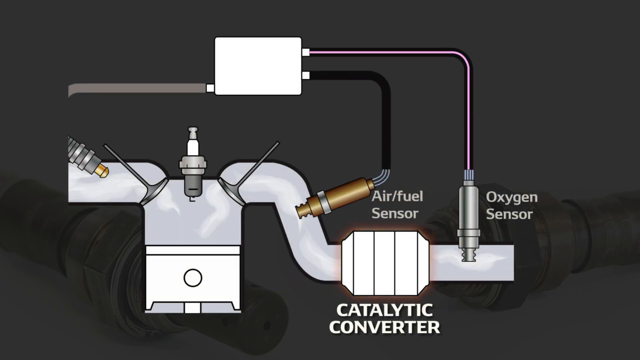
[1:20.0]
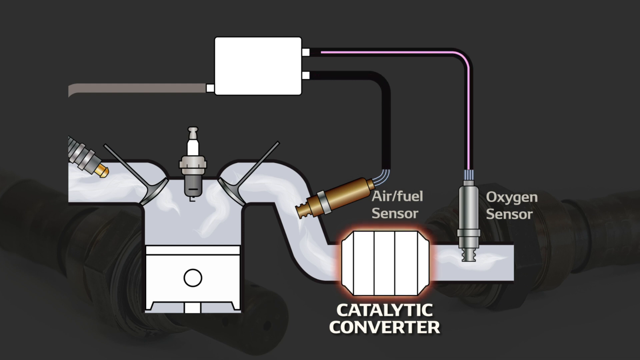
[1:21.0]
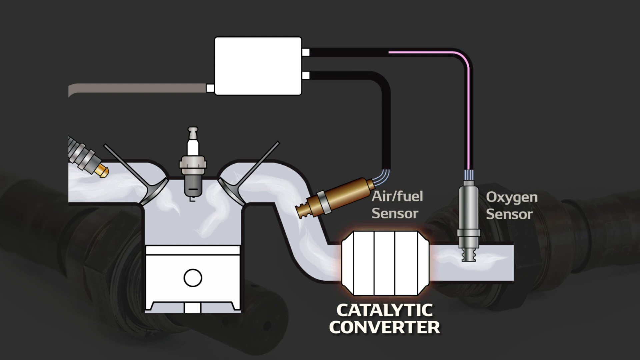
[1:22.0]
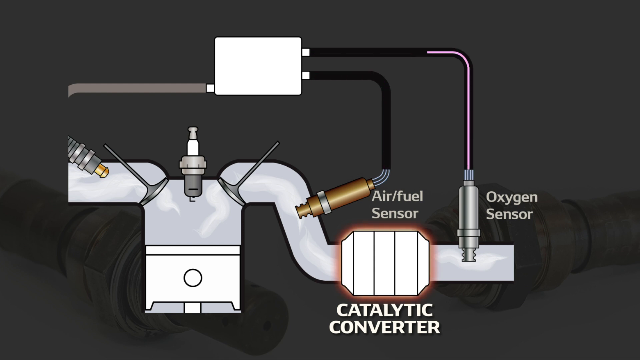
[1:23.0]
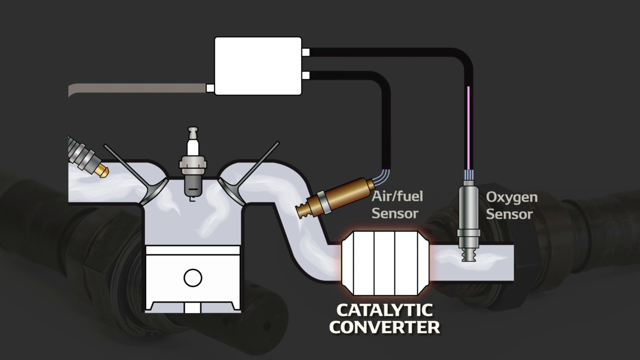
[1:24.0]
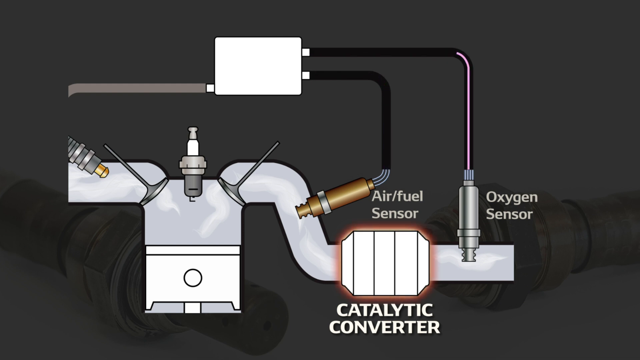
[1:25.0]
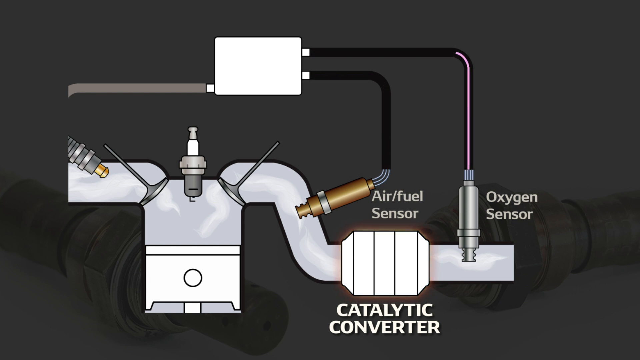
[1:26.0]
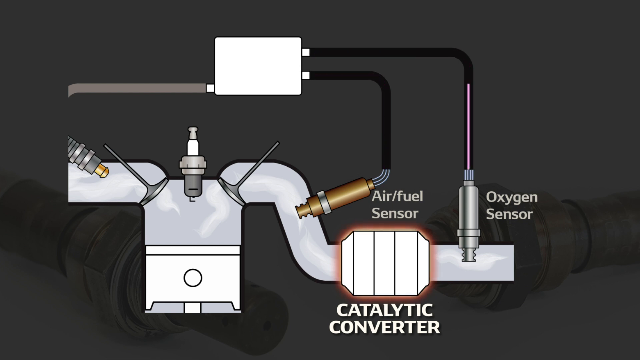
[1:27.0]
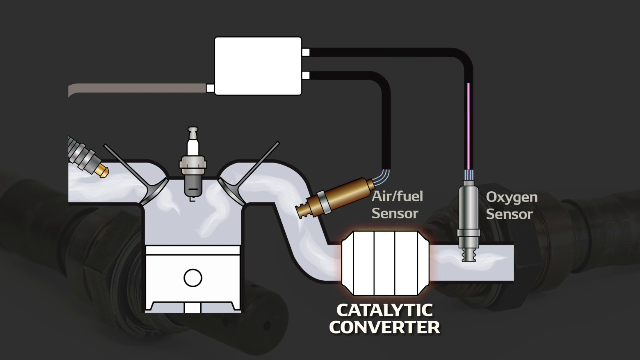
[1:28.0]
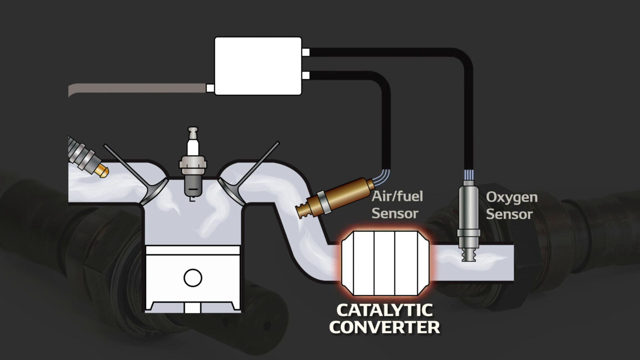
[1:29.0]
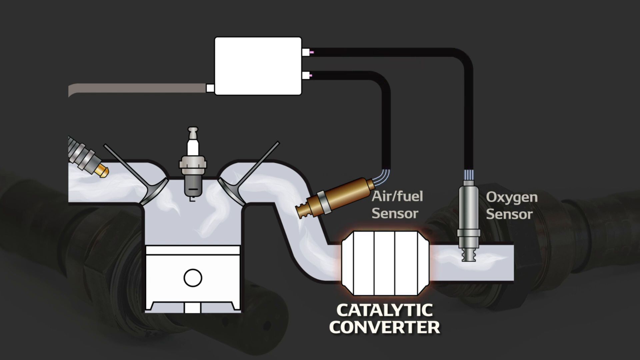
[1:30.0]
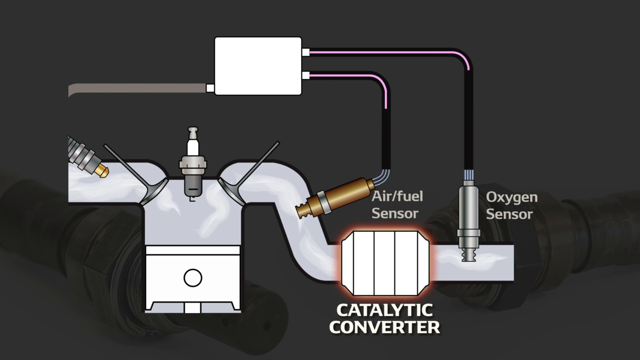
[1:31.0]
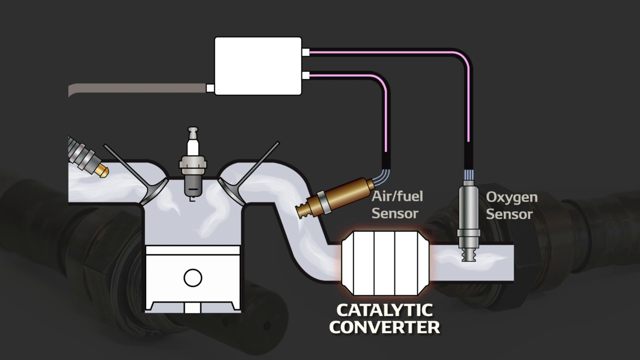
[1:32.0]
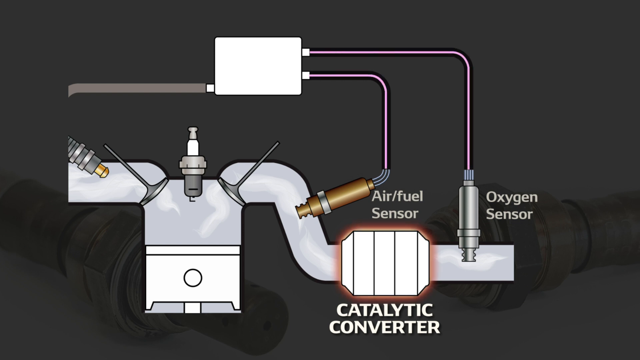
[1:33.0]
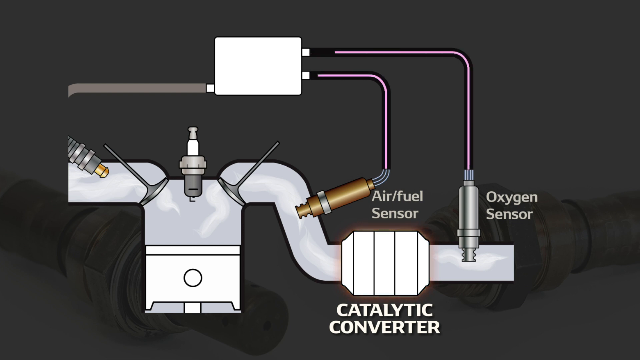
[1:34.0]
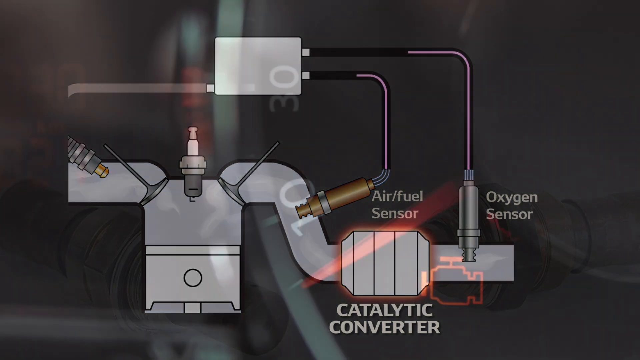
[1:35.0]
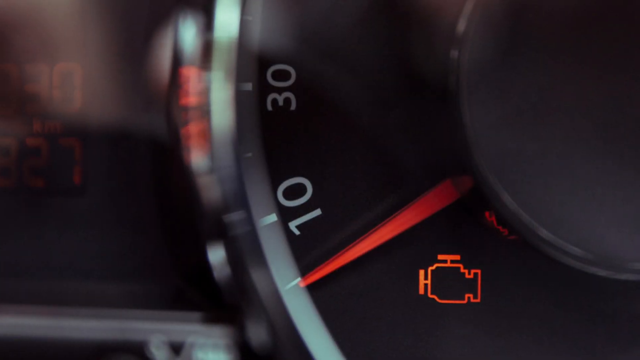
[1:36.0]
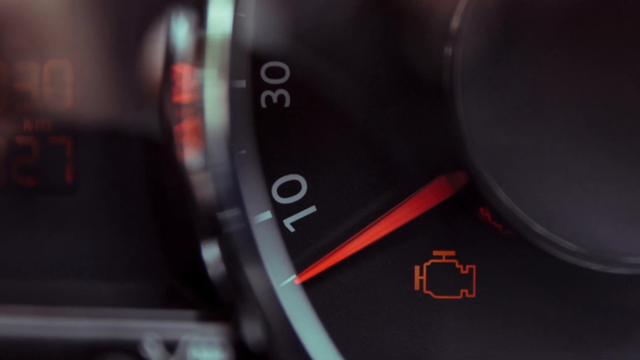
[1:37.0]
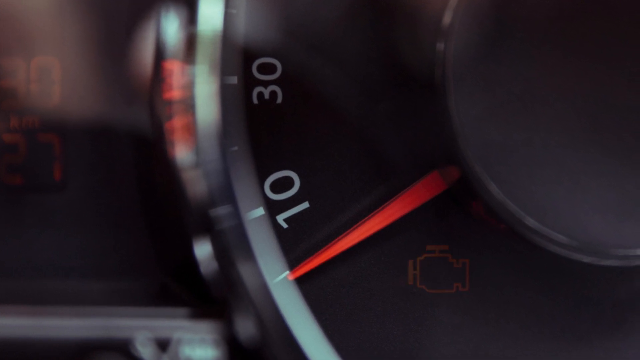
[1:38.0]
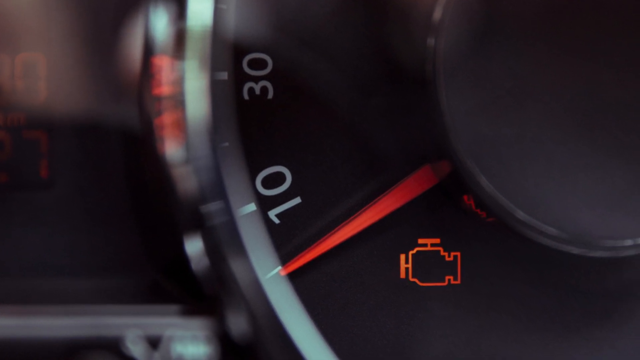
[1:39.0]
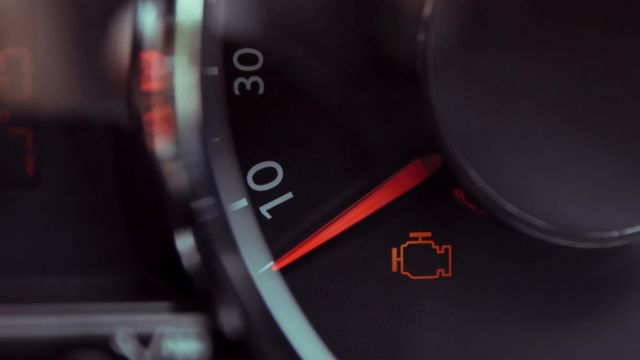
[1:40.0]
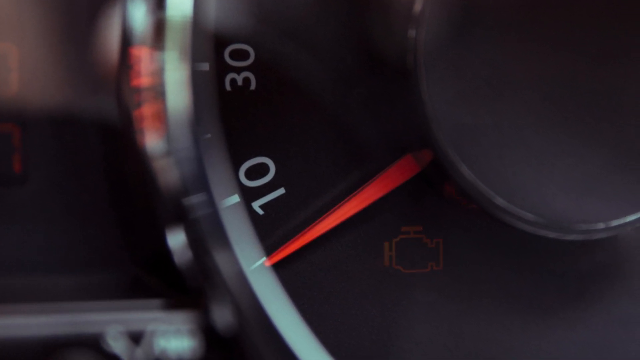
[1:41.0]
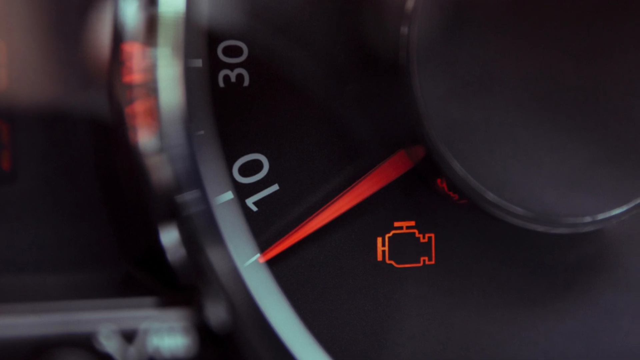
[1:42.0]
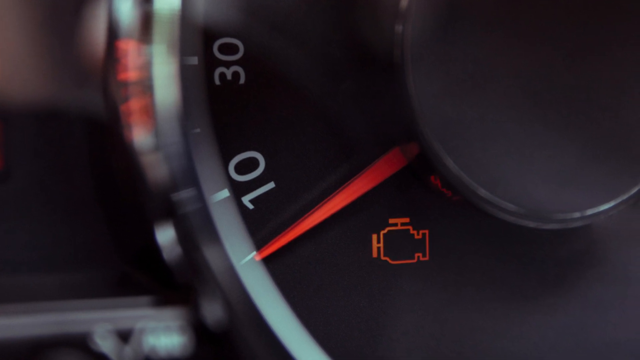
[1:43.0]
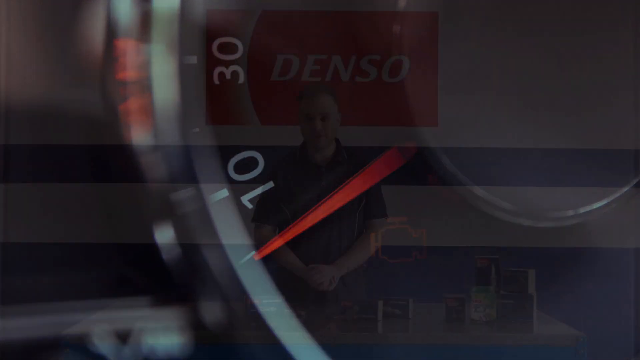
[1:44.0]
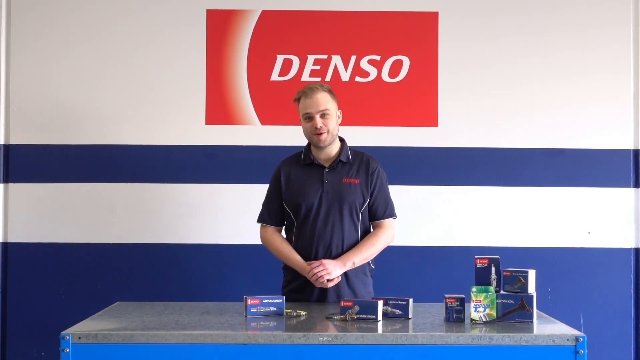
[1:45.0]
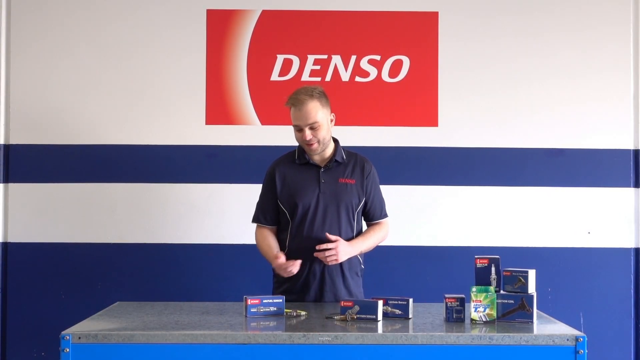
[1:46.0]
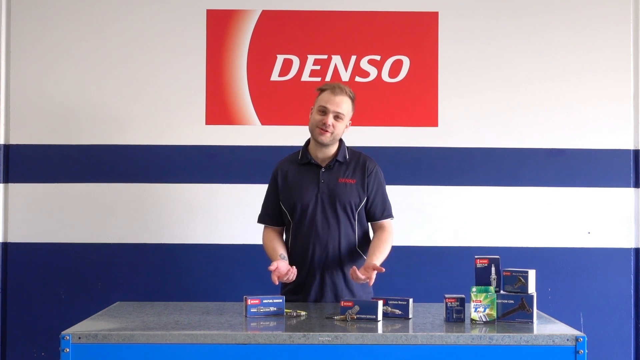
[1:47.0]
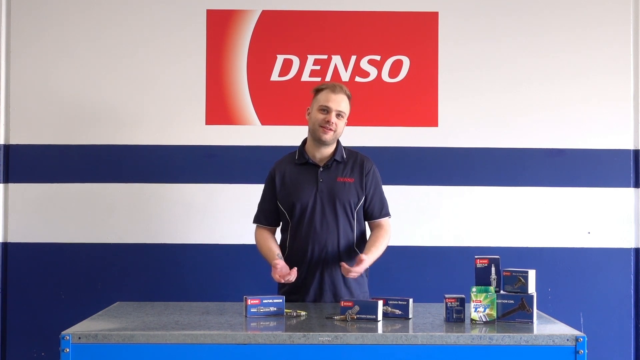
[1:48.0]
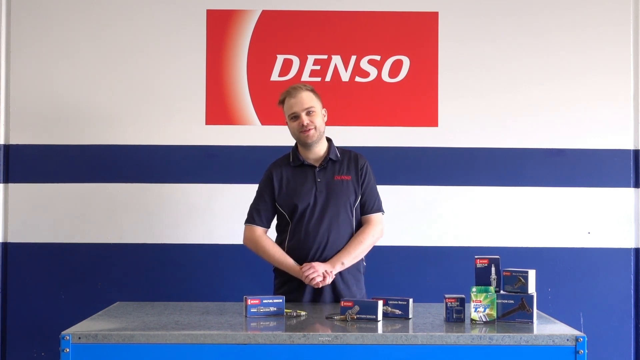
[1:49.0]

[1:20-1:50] An animated image shows the catalytic converter on the right side, with the air fuel sensor above it, a label reading "oxygen sensor," and a pipe. The oxygen sensor is silver. A pinkish pipe or wire is visible: in the animation something black shoots out pink, apparently maybe the air. The same happens in the air fuel sensor. Then an image of a car's engine light comes on, flashing a red-orange color. The video then returns to the man in front of the DENSO equipment.